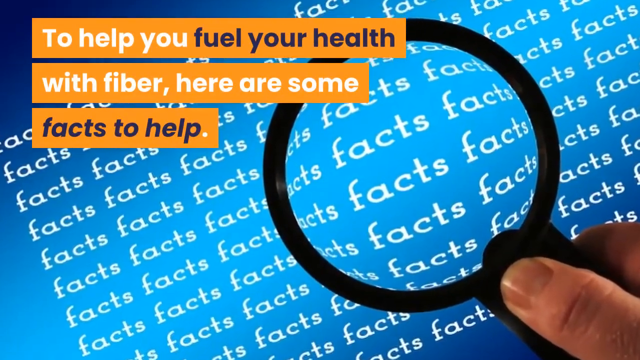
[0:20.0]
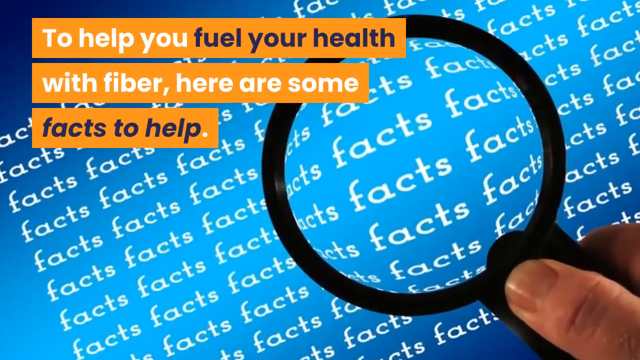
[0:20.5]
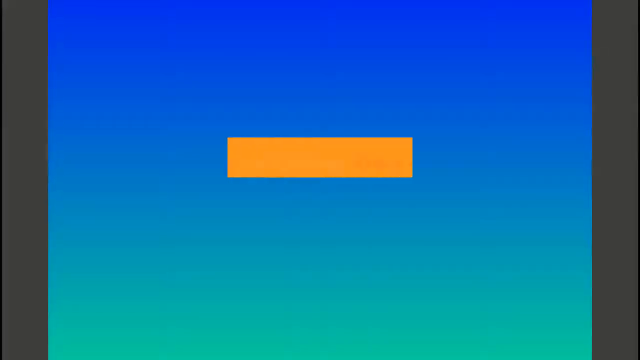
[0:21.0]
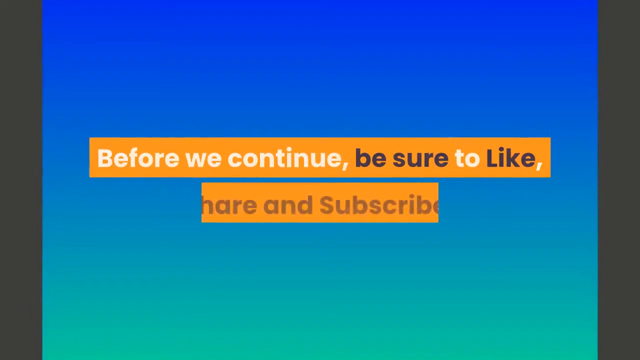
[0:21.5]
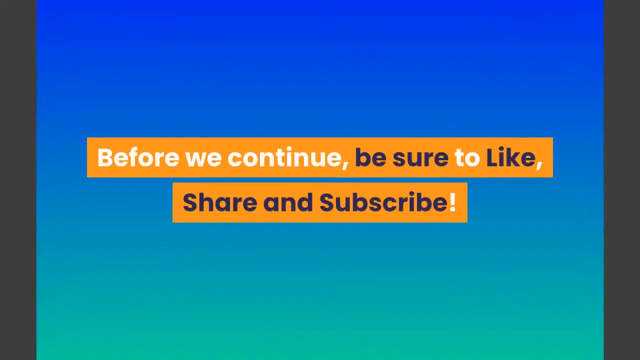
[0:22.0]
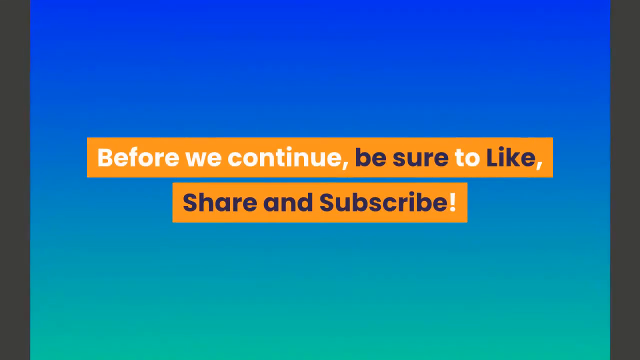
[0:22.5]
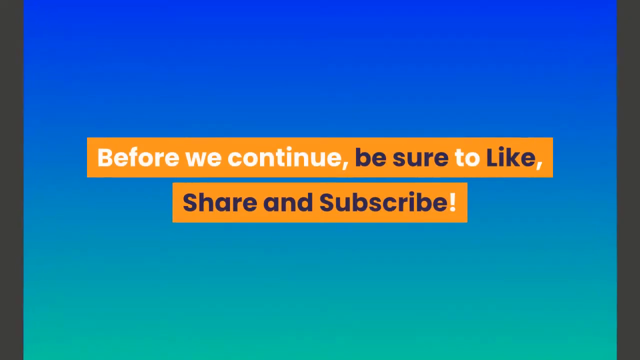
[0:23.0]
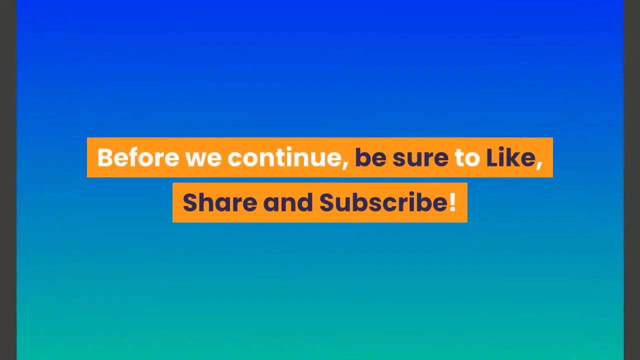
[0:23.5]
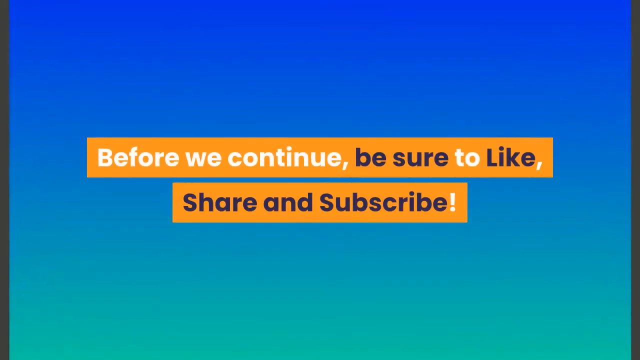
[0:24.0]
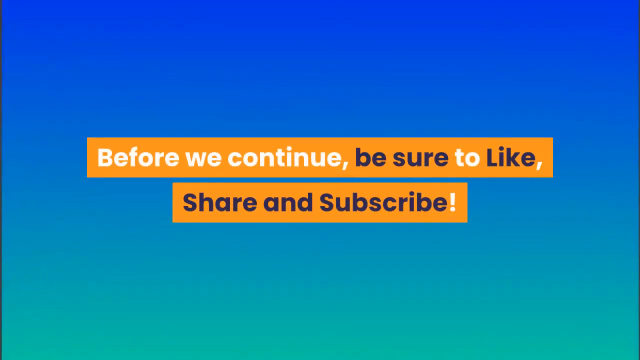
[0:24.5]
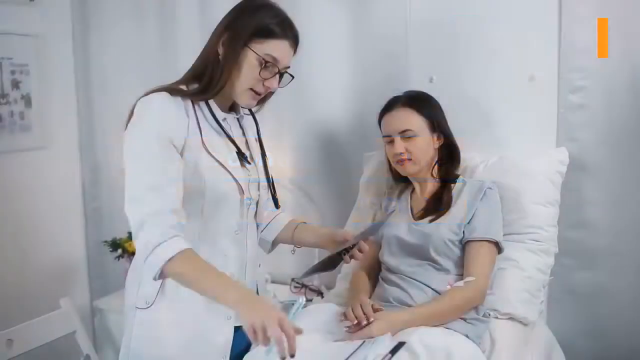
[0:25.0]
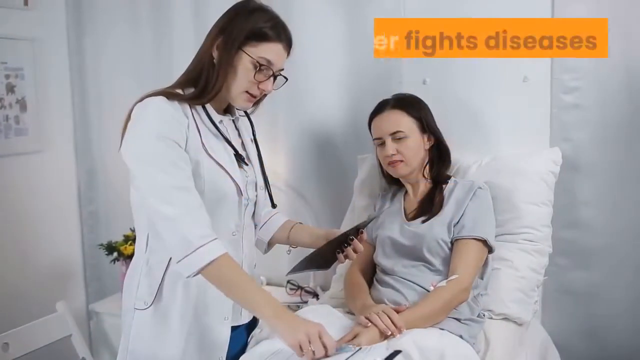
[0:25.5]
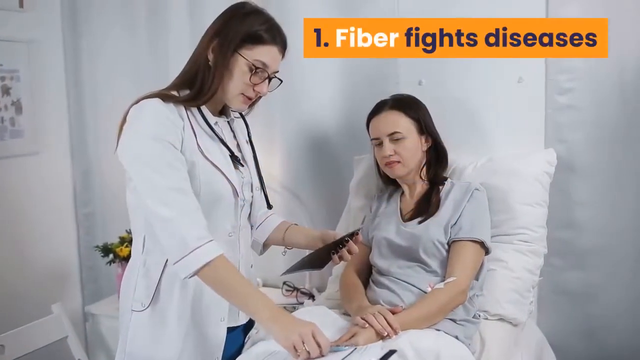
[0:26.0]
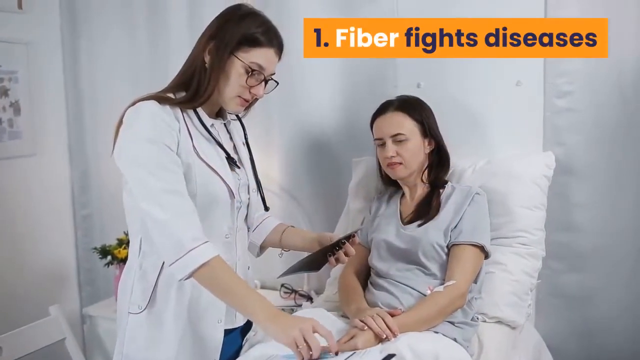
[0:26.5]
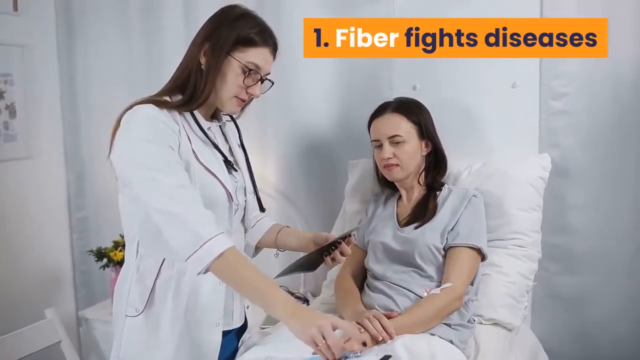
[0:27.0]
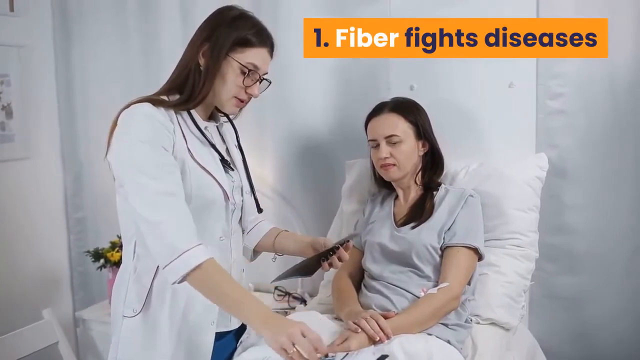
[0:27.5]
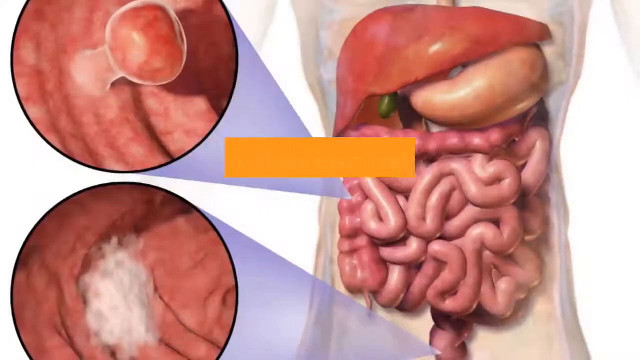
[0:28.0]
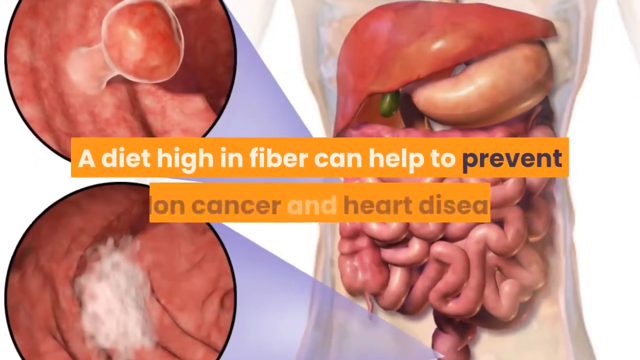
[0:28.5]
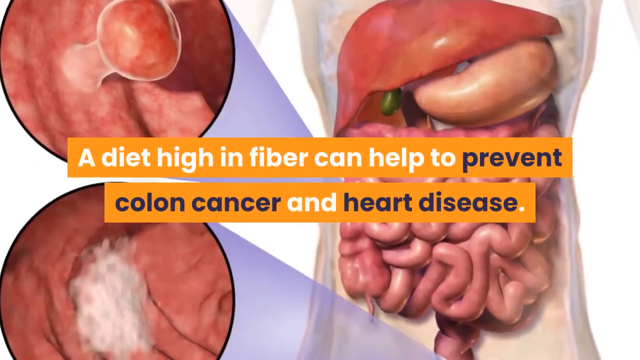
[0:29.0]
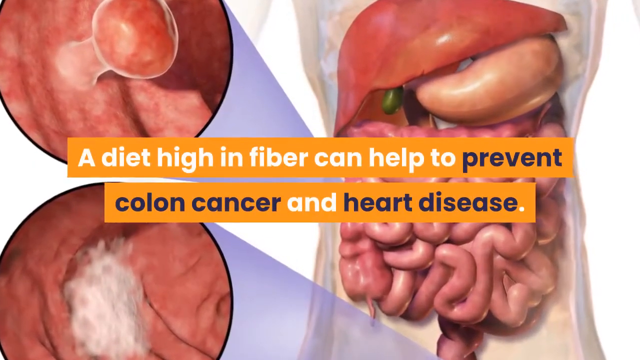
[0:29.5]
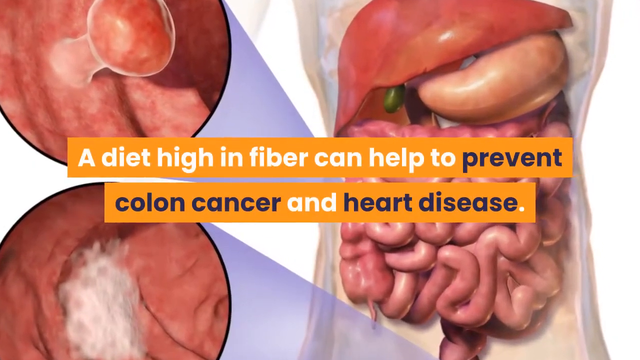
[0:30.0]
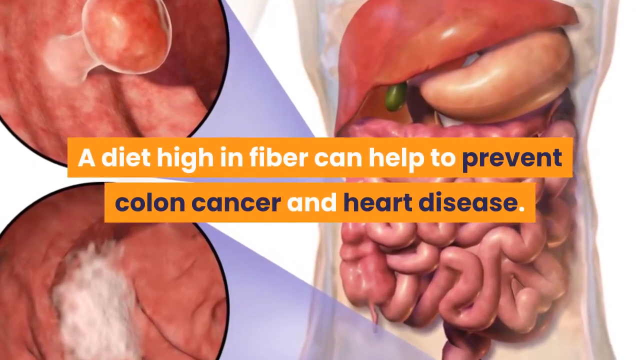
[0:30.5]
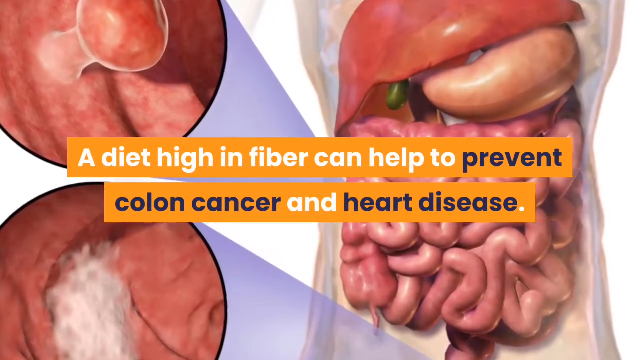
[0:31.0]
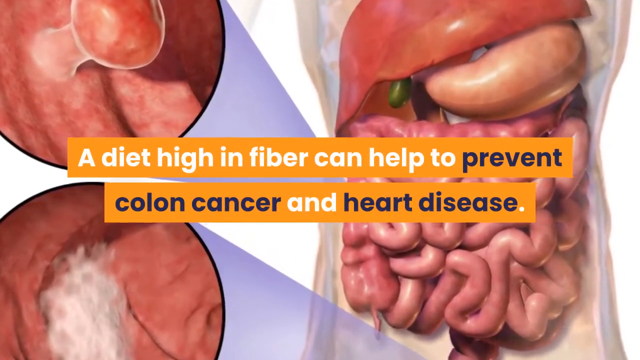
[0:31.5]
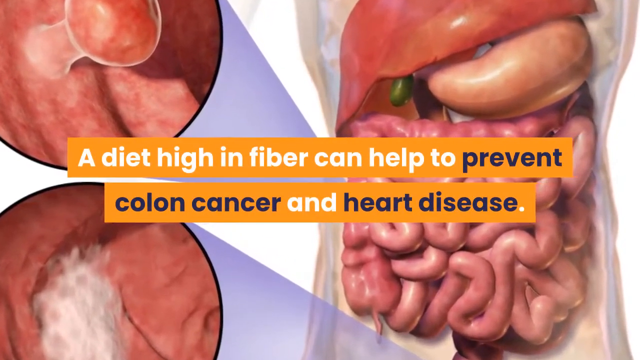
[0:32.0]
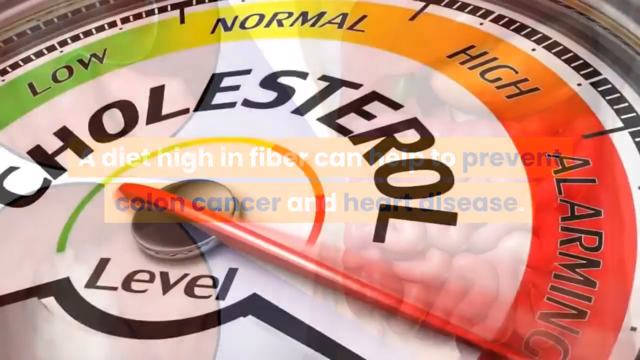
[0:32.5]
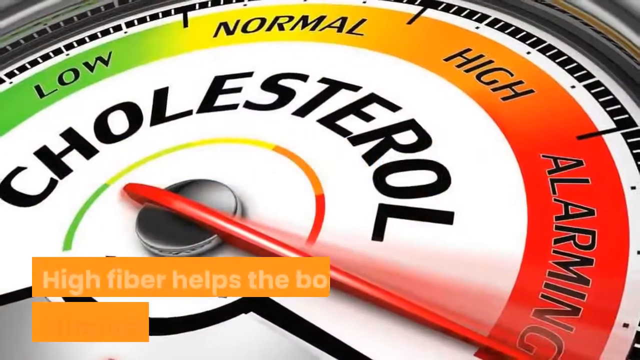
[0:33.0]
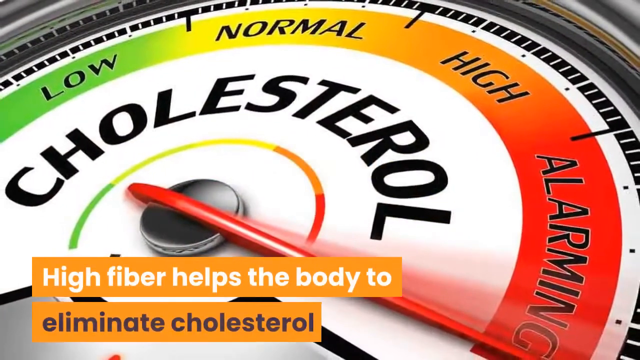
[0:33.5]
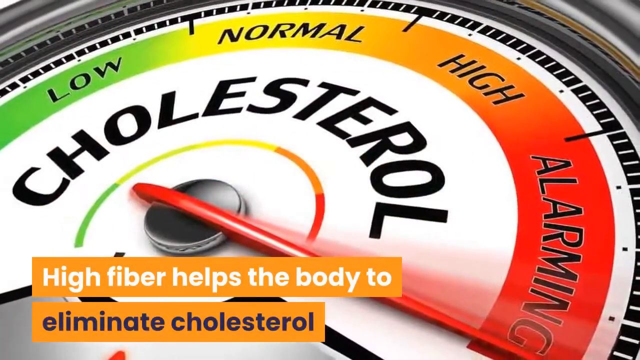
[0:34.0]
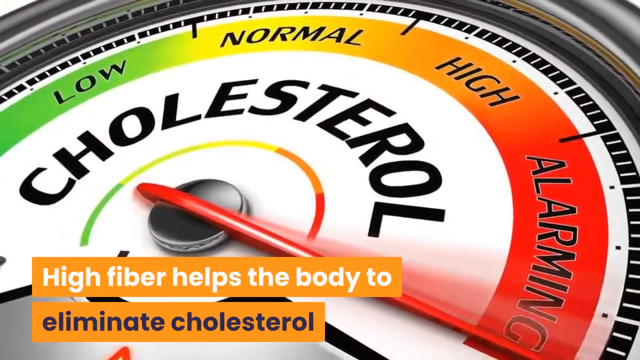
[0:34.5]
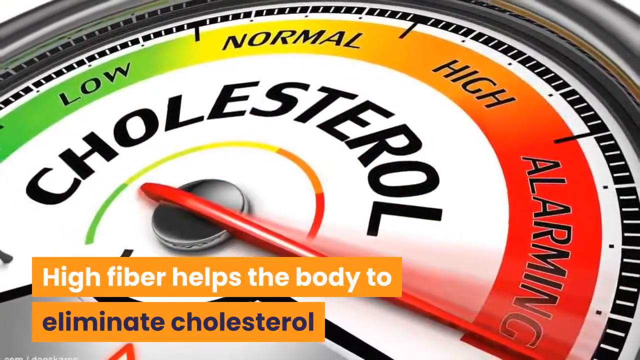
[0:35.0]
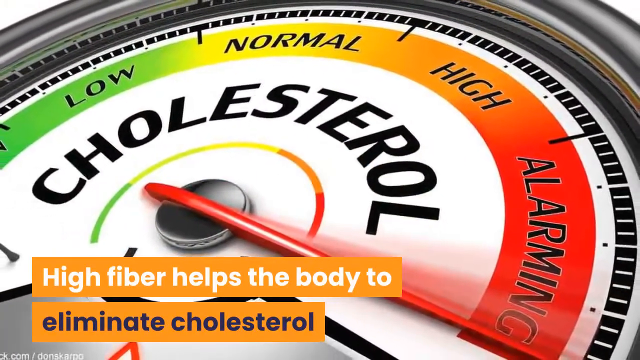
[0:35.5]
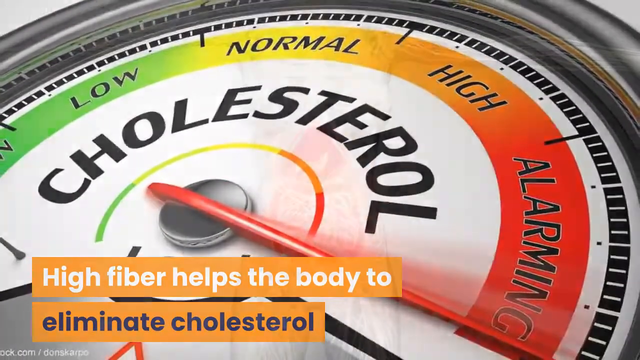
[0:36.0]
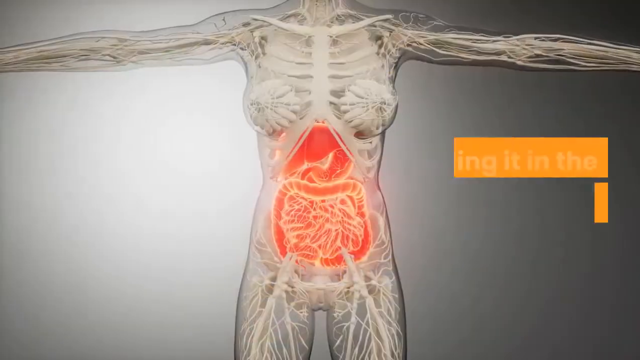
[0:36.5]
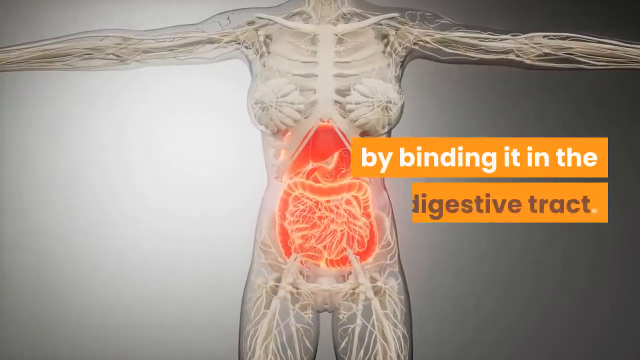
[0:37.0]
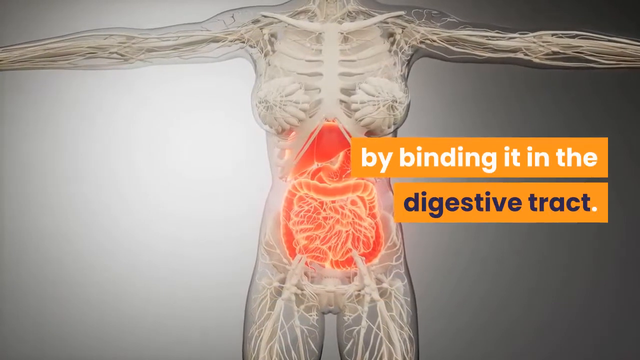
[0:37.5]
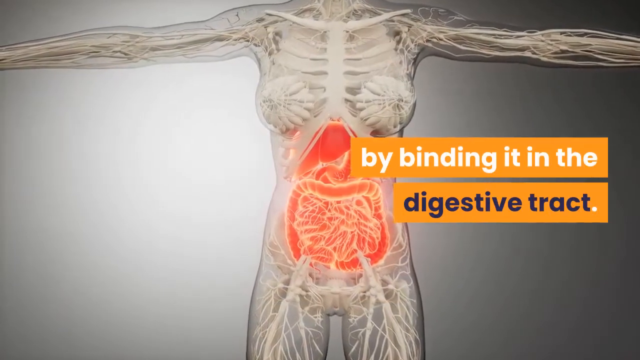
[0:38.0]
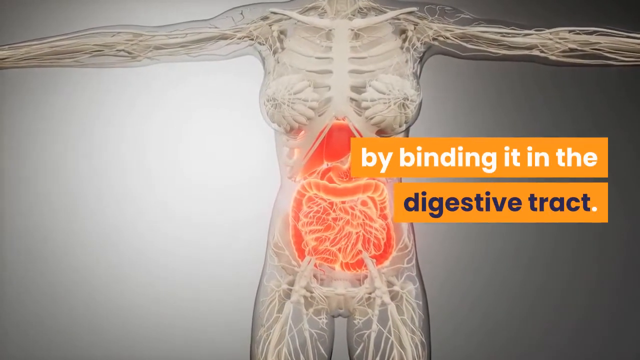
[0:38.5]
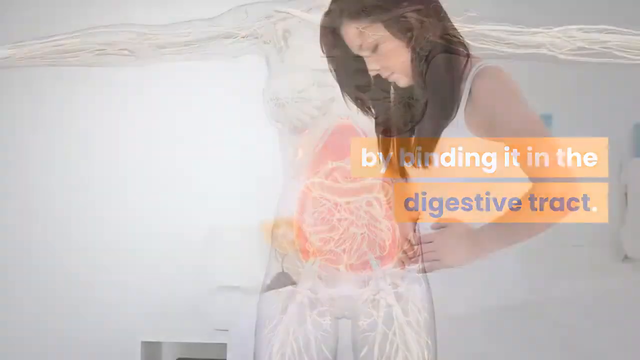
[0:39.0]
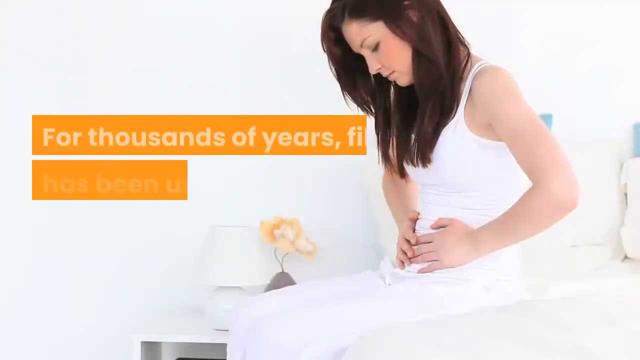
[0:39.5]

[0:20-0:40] A graphic shows somebody holding a magnifying glass over a screen on which the word "facts" is written many times, with the word shown in a bigger size through the glass. Words above the graphic read "To help you fuel your health with fiber here are some facts to help." Facts are then shown slide by slide, including a slide that reads "Before we continue be sure to share and subscribe." A woman in a hospital or a doctor's office looks like she is being examined, with the text "Fiber helps fight diseases." Then a photo of organs appears with the text "A diet high in fiber can help to prevent colon cancer as well as heart disease."